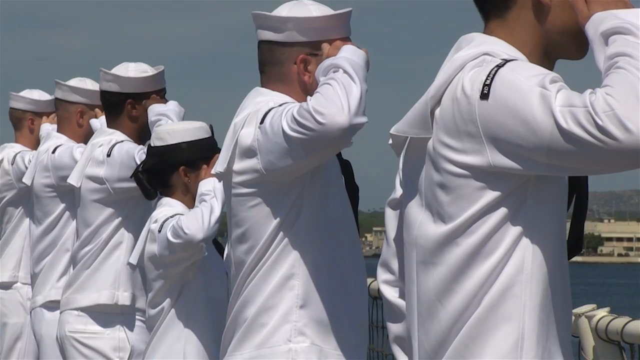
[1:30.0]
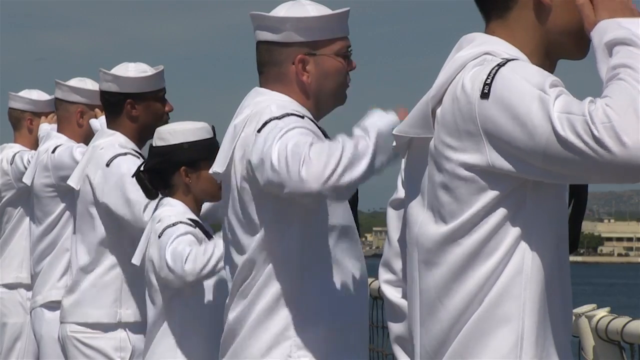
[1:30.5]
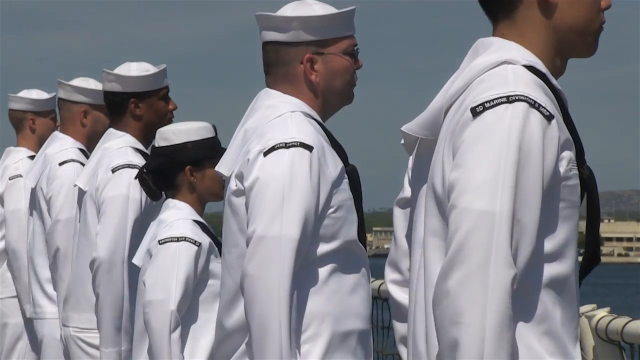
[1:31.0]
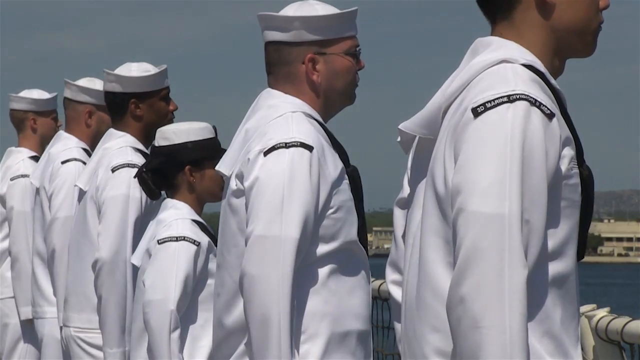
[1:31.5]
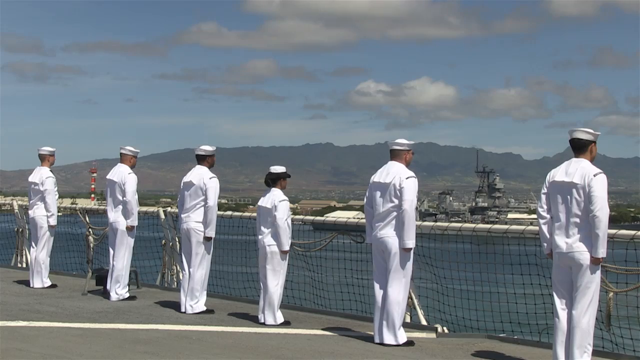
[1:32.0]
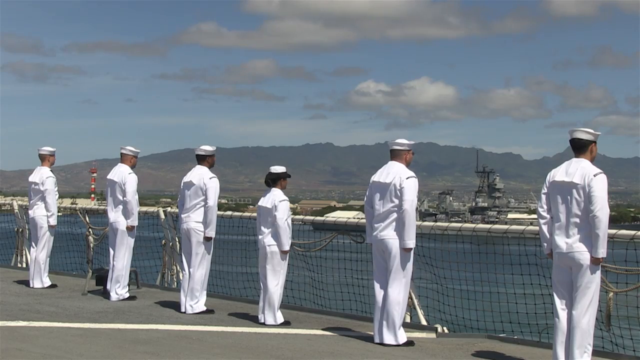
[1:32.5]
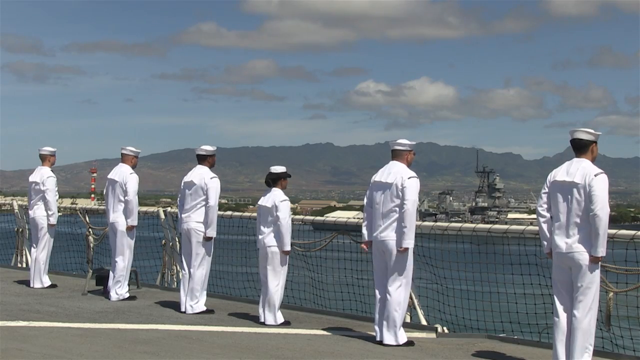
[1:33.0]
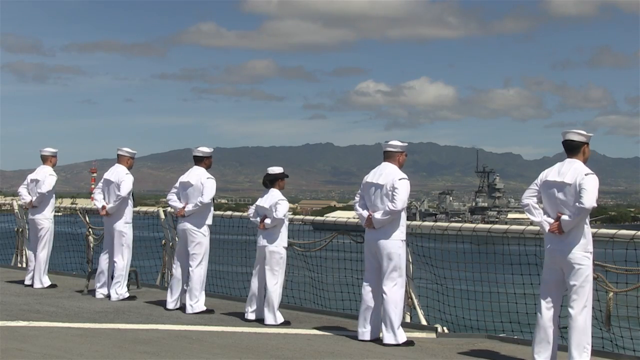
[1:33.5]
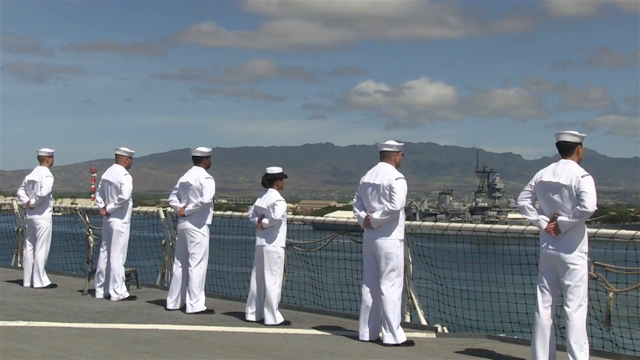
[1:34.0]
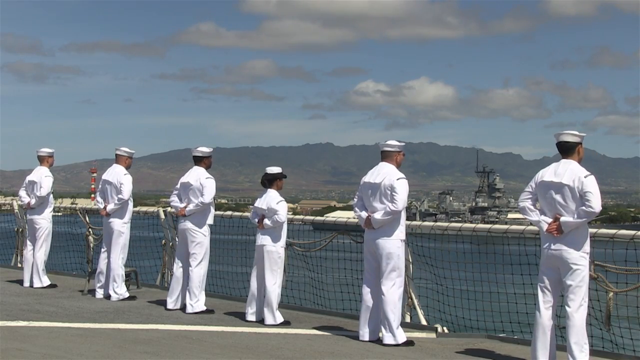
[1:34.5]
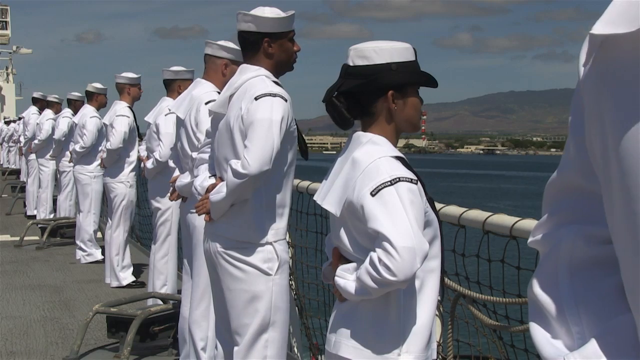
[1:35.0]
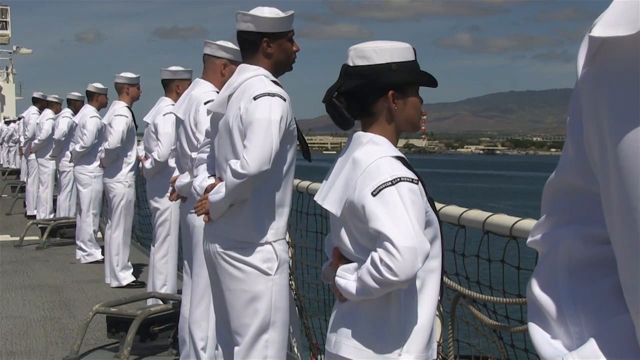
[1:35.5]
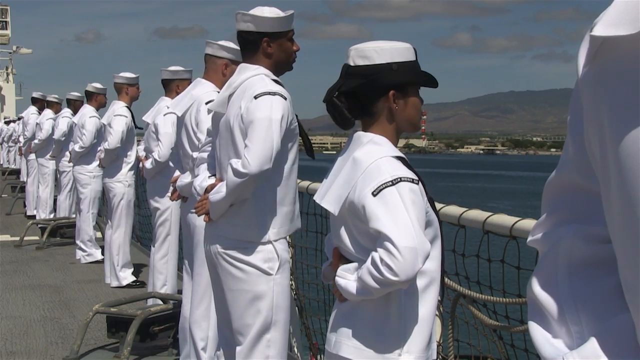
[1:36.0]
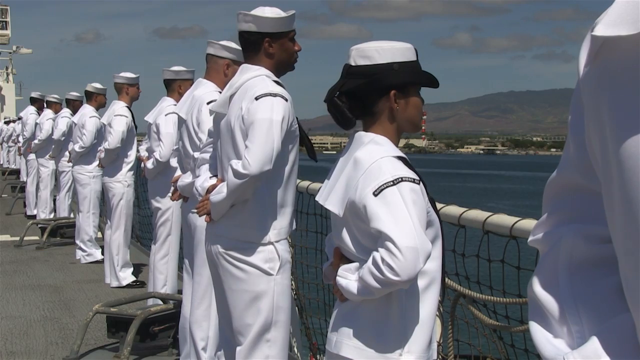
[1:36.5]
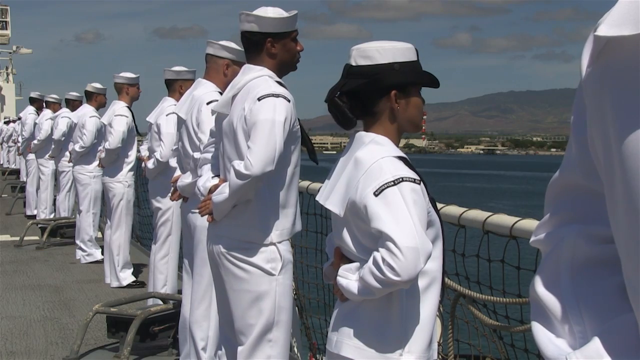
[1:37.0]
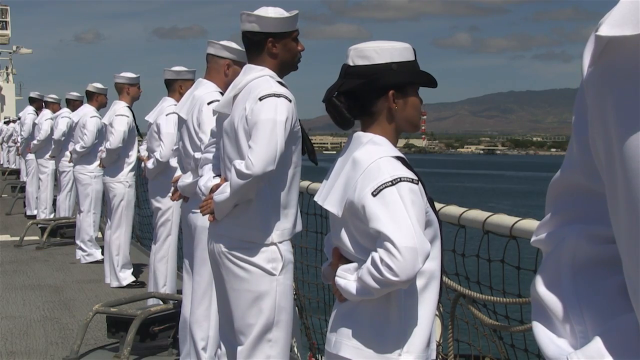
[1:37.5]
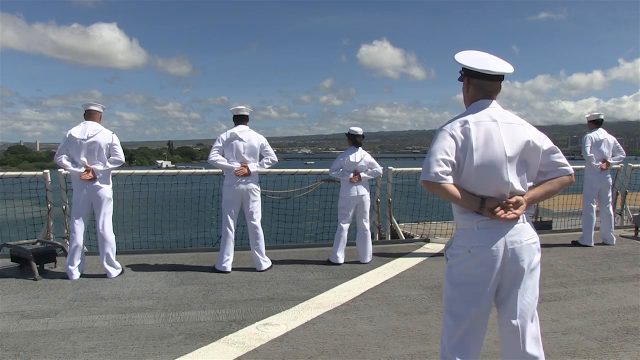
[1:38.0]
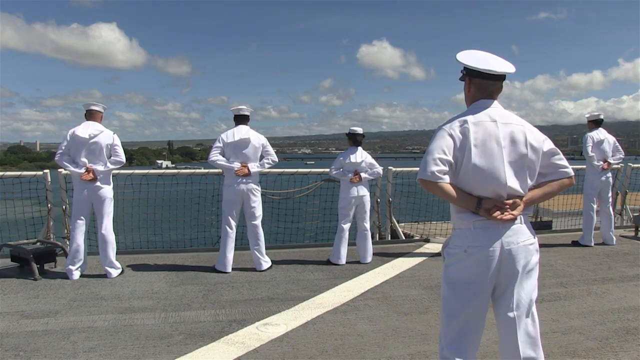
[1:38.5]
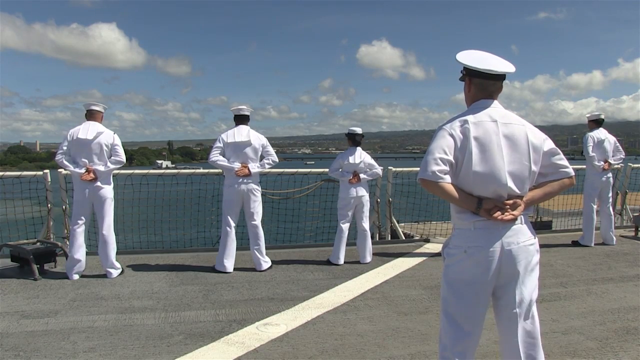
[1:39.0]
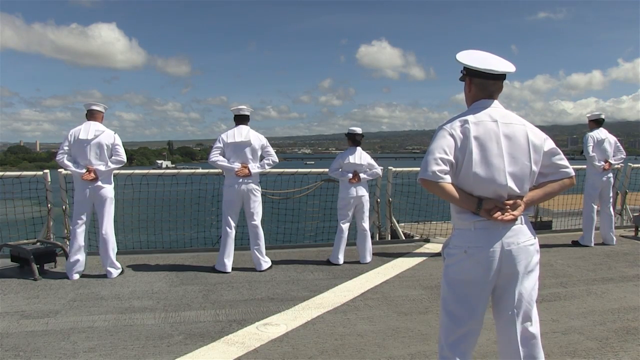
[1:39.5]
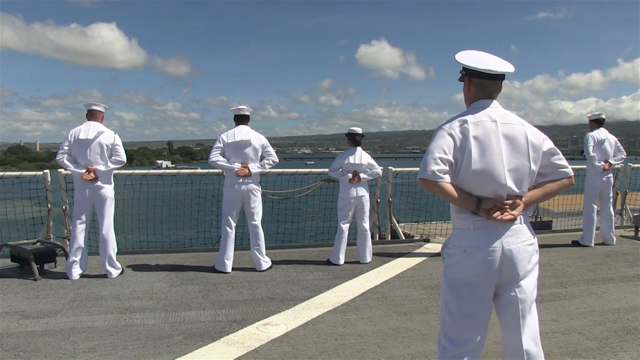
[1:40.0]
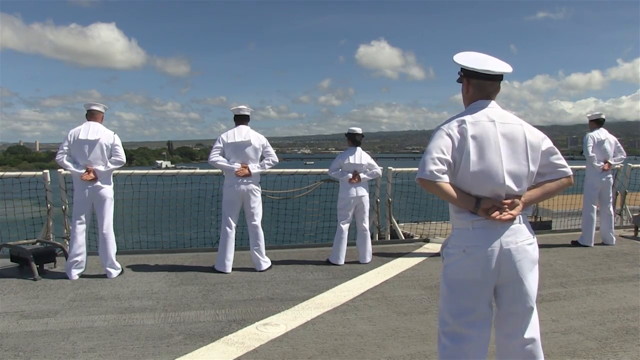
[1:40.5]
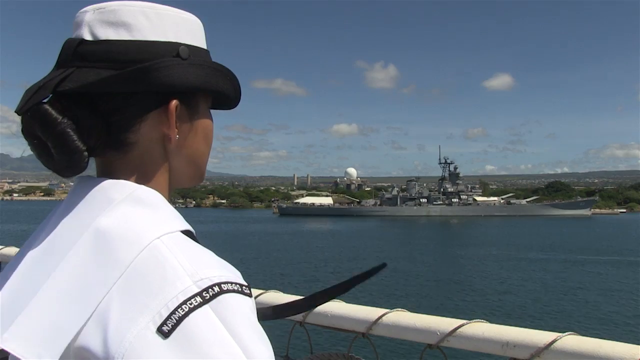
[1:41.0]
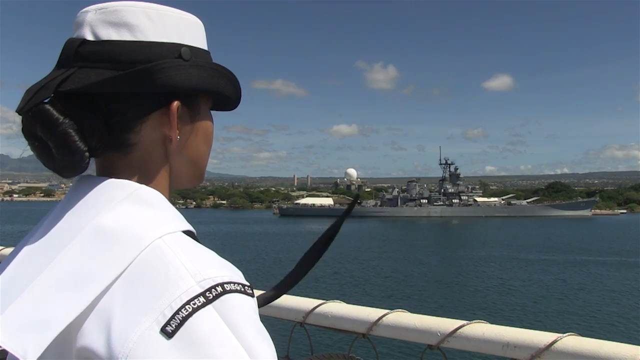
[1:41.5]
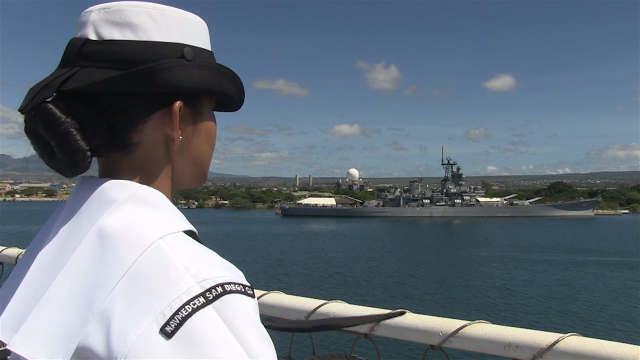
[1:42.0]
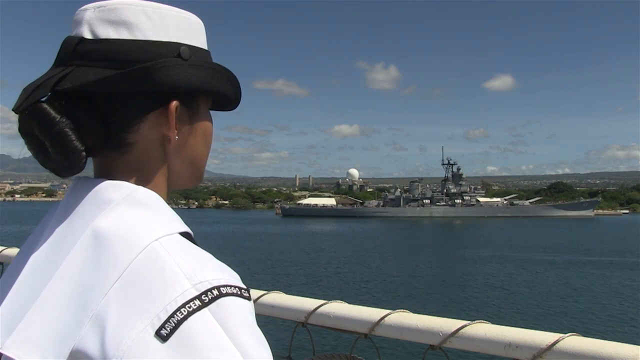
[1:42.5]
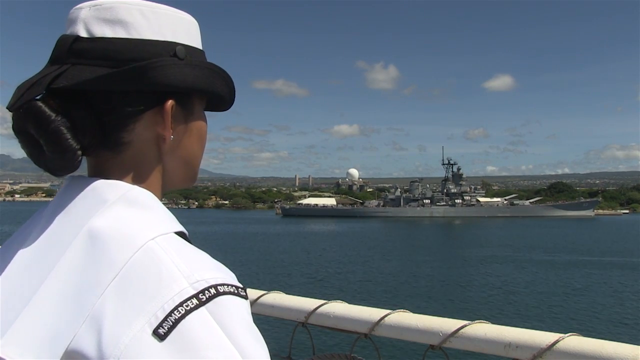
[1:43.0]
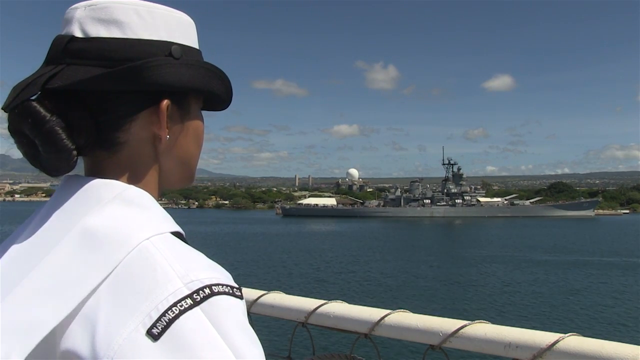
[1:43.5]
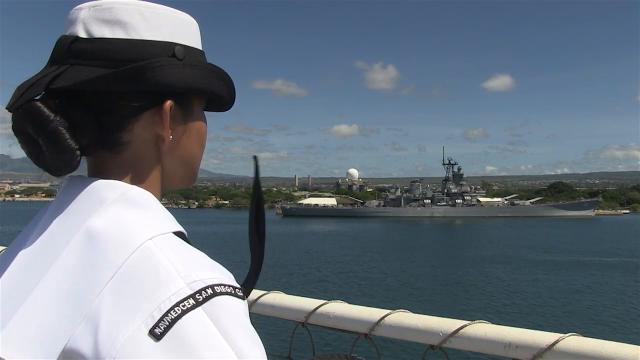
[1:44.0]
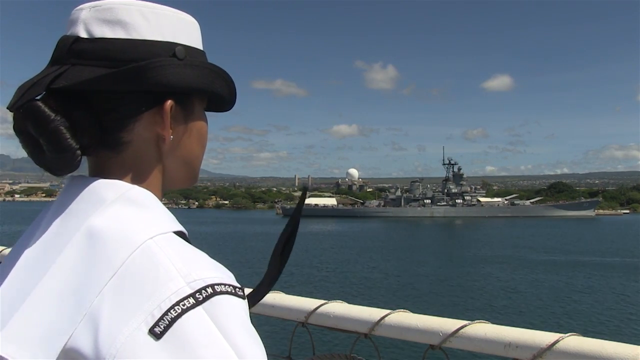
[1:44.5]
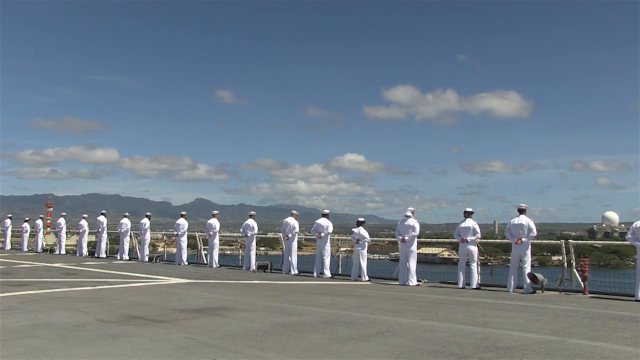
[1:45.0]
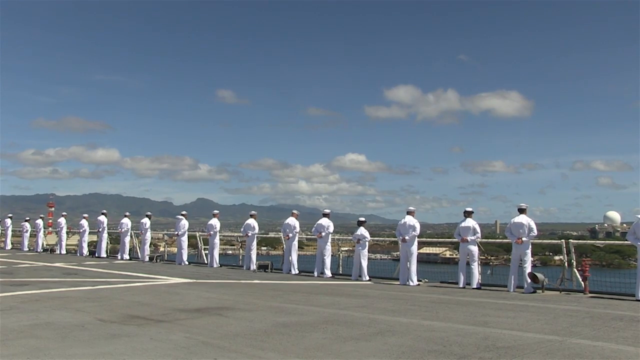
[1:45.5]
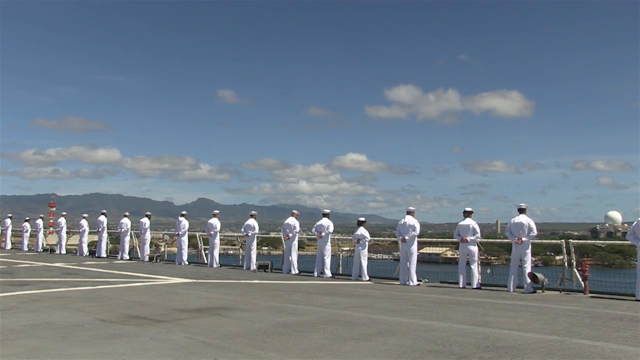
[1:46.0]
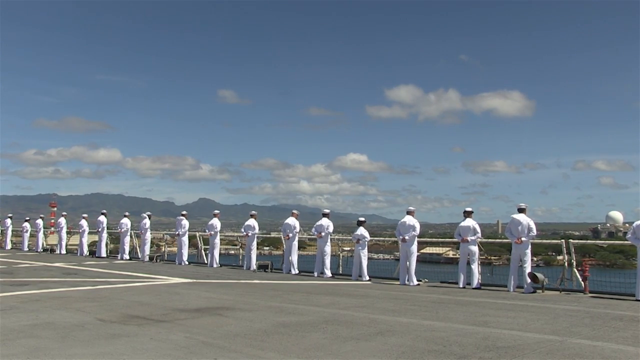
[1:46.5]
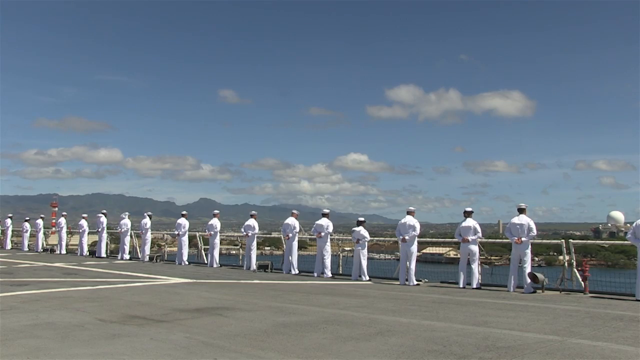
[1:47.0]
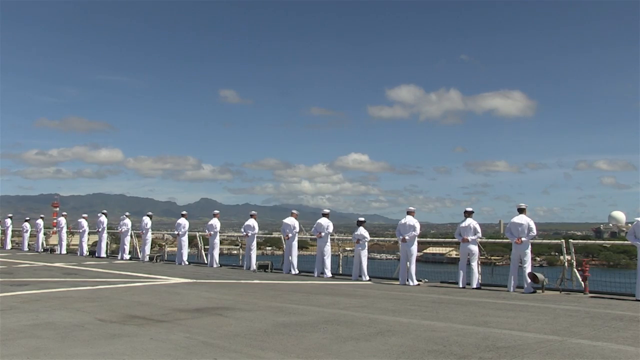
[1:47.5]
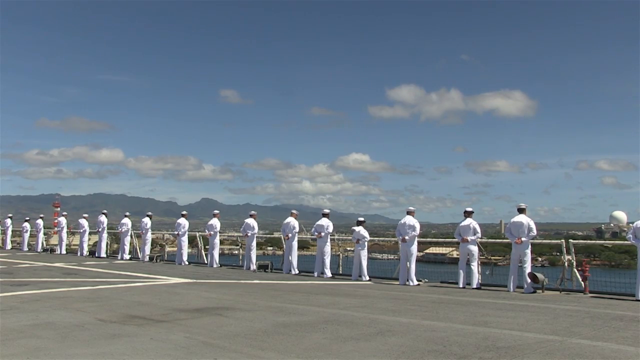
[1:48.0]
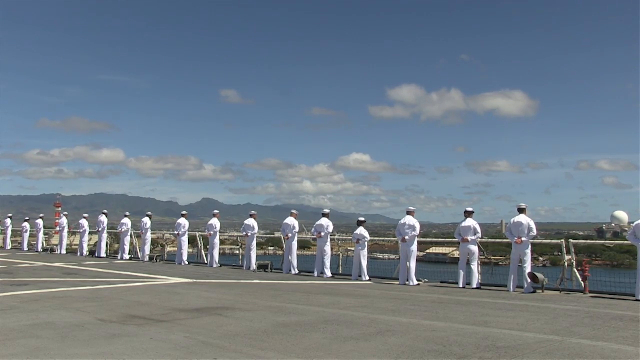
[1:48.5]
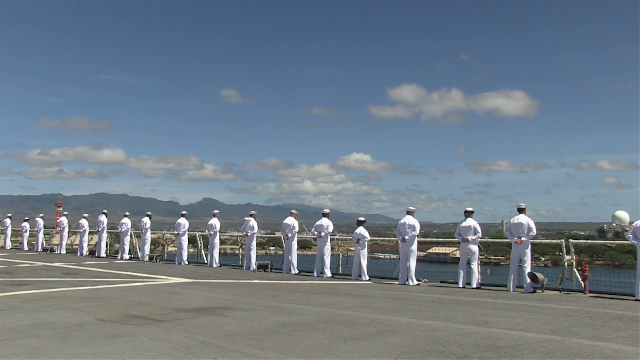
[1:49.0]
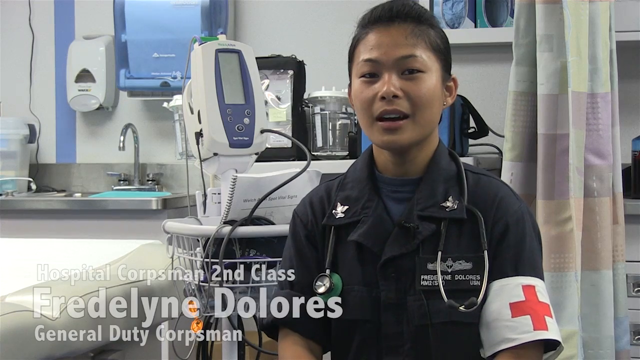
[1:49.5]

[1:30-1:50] The naval crew members finish the salute and drop their hands to their sides. Six people are on camera, apparently five men and one woman. They put their hands back behind their backs with their elbows straight out, clutching the other hand and staring straight ahead. The commander does it too. It looks like there might be another ship they are looking at, but the shot is mainly of the crew members and not what they are looking at. Then the video shows Fredelyne Dolores, who is also a hospital corpsman.